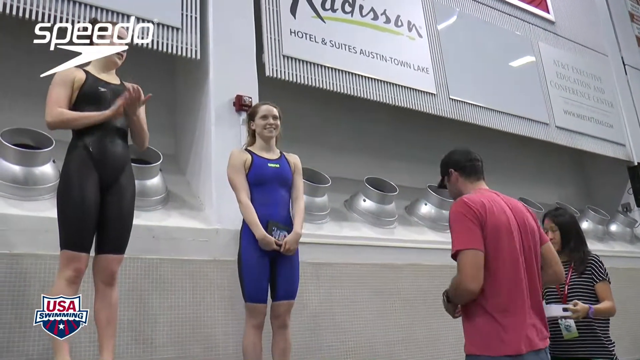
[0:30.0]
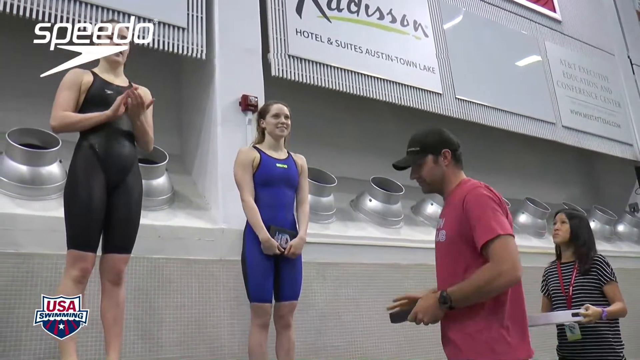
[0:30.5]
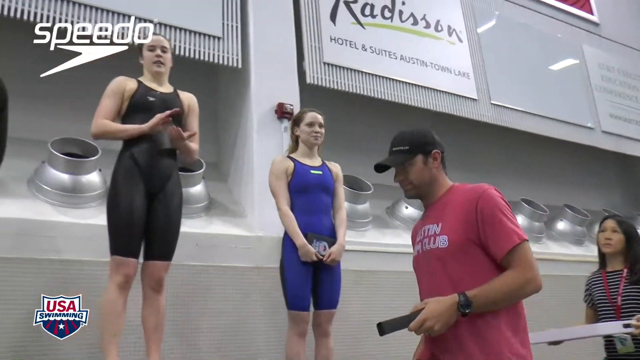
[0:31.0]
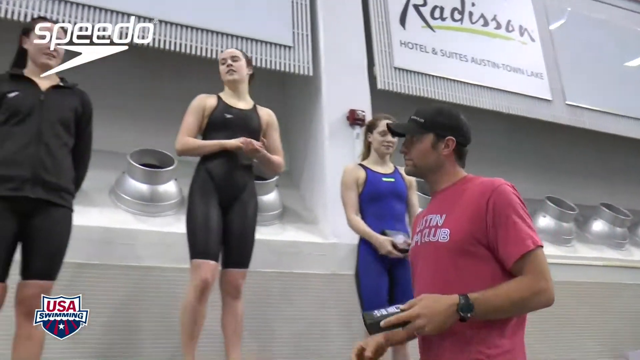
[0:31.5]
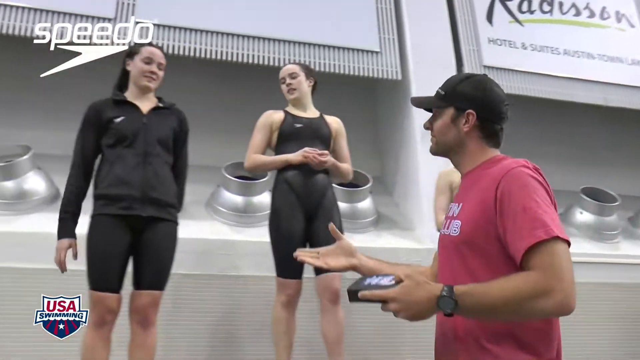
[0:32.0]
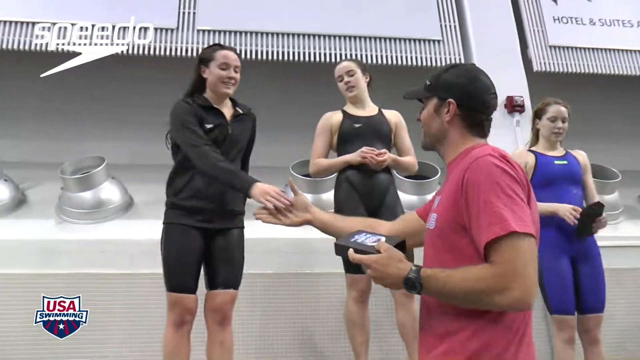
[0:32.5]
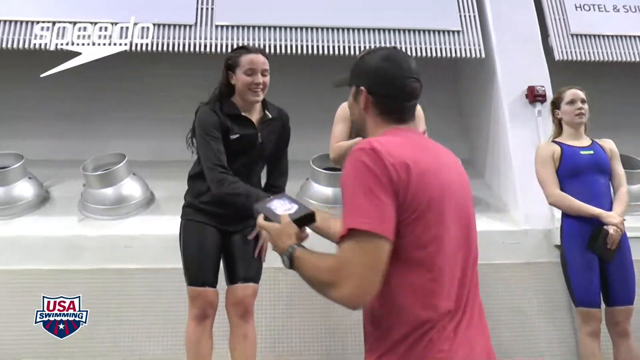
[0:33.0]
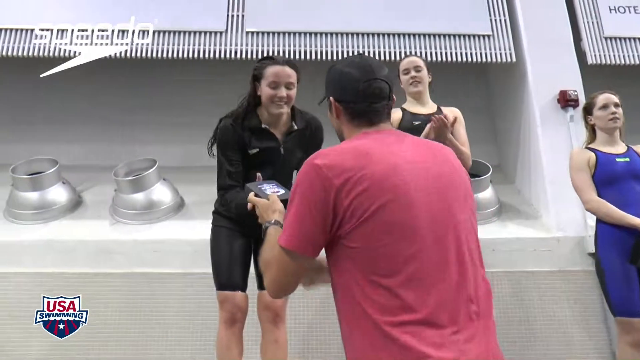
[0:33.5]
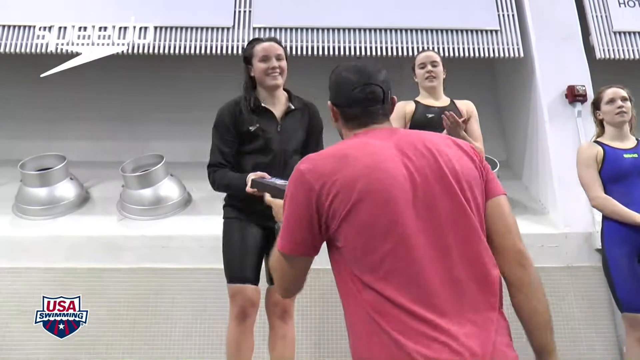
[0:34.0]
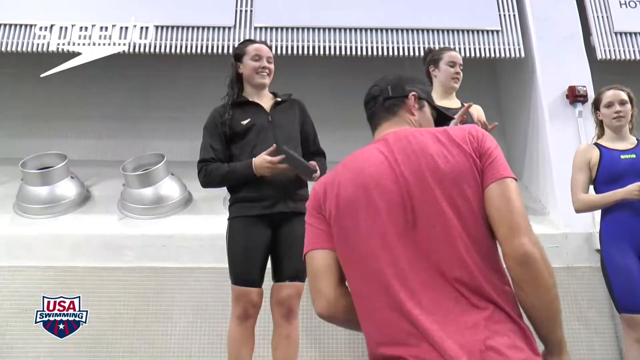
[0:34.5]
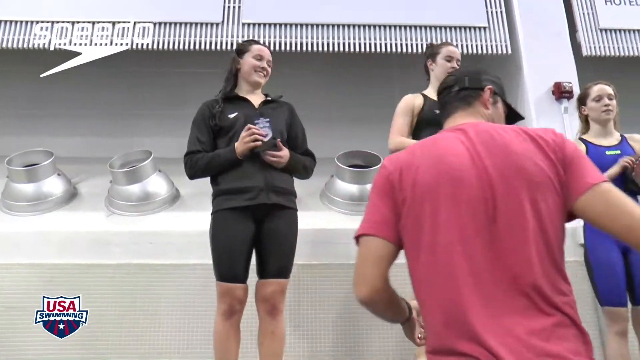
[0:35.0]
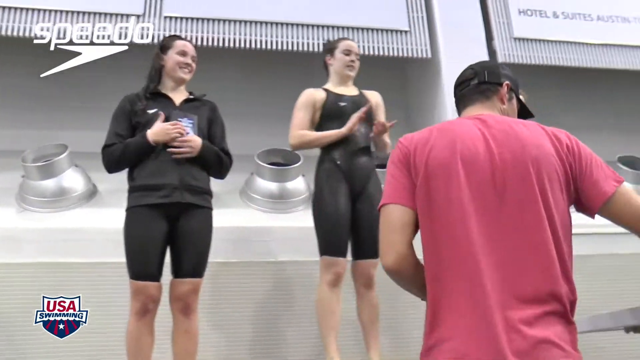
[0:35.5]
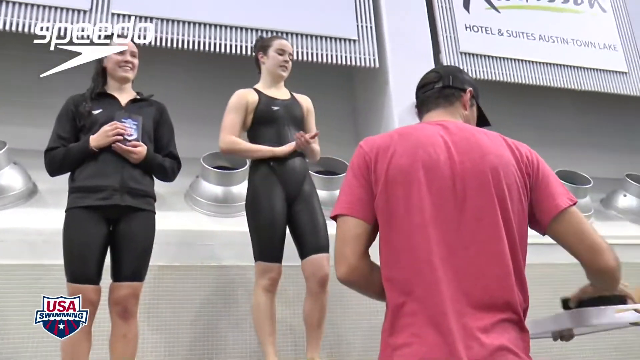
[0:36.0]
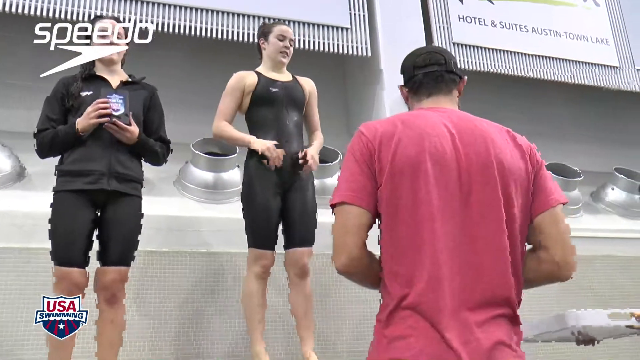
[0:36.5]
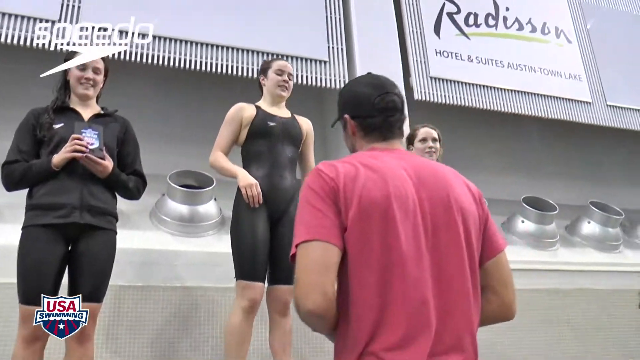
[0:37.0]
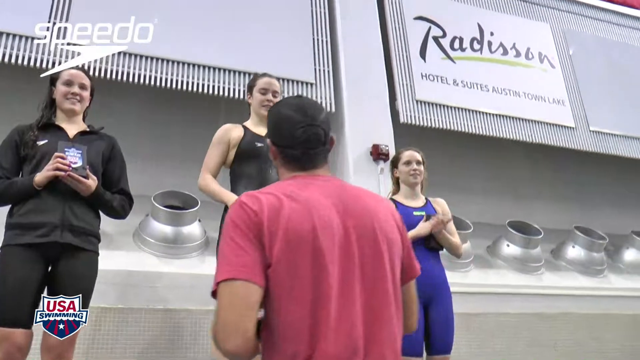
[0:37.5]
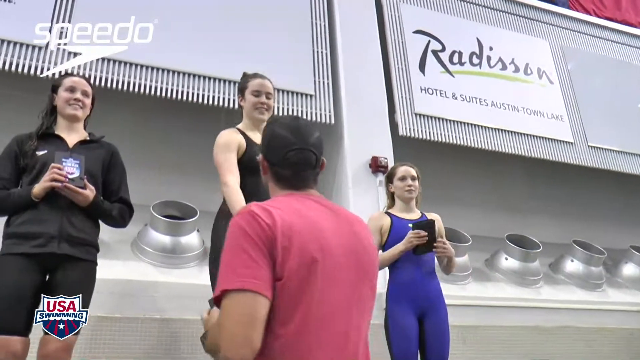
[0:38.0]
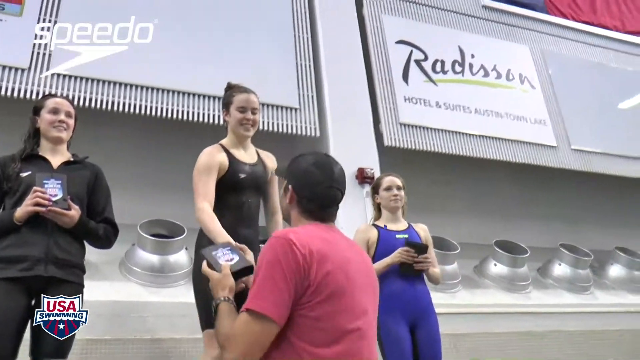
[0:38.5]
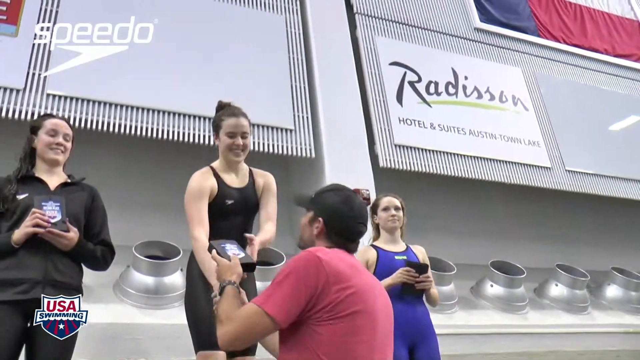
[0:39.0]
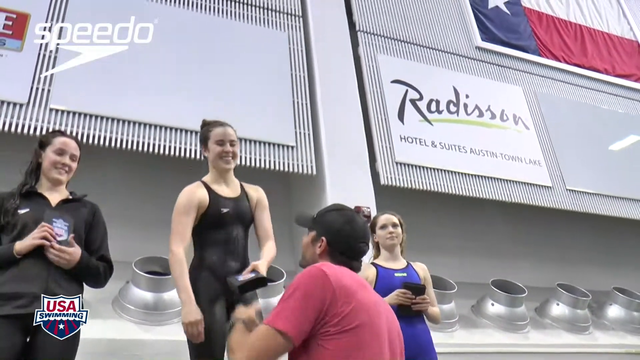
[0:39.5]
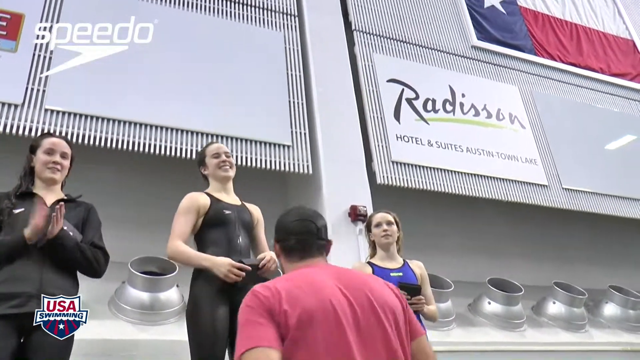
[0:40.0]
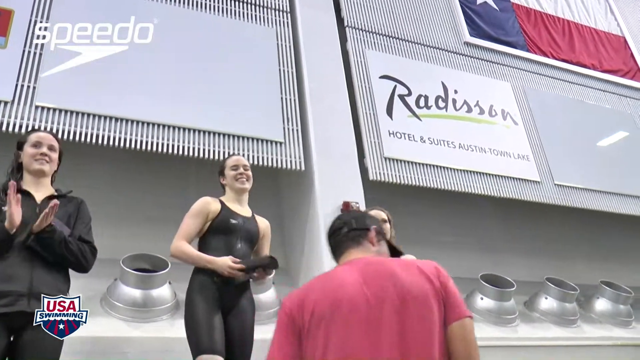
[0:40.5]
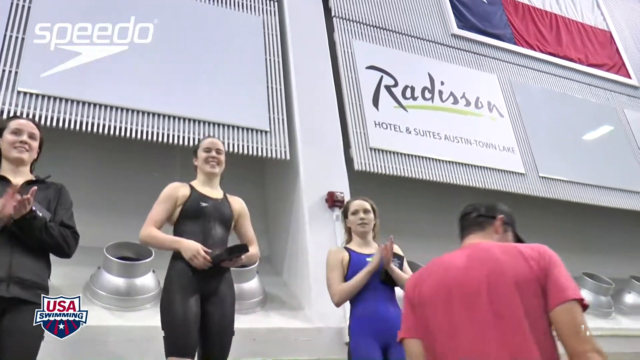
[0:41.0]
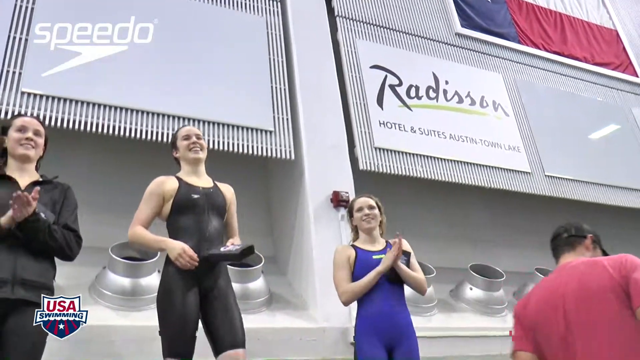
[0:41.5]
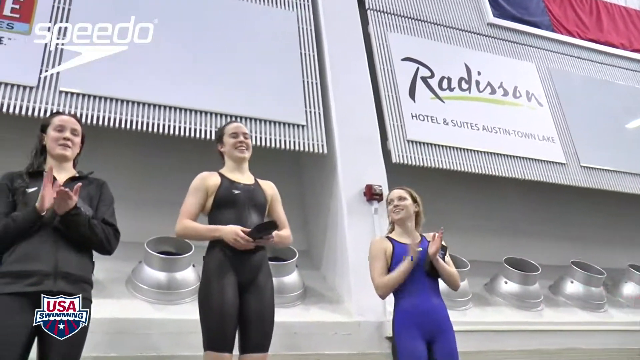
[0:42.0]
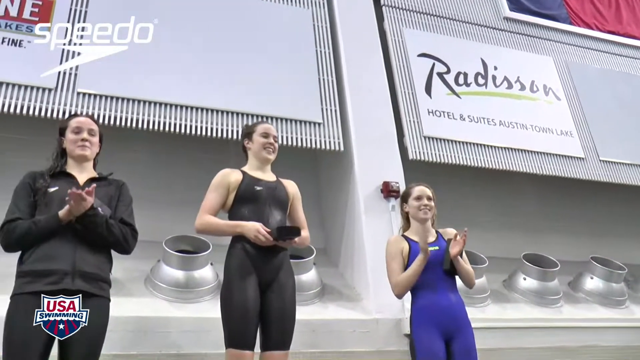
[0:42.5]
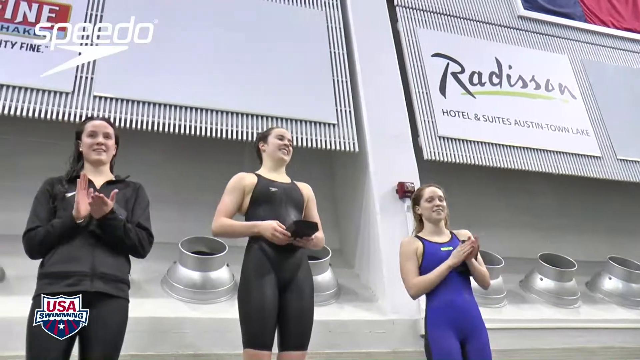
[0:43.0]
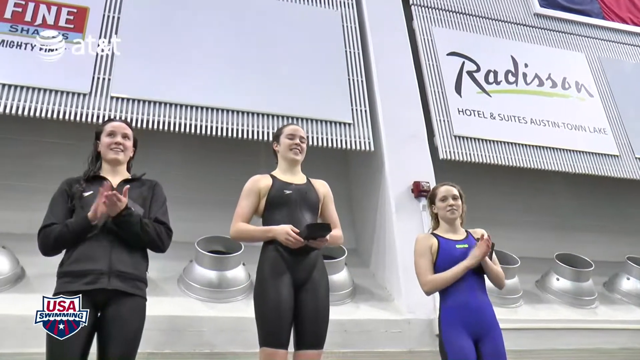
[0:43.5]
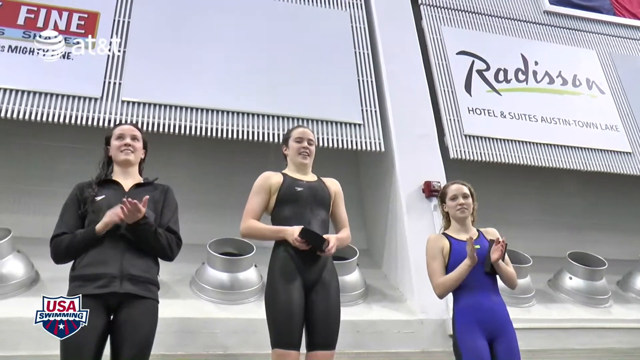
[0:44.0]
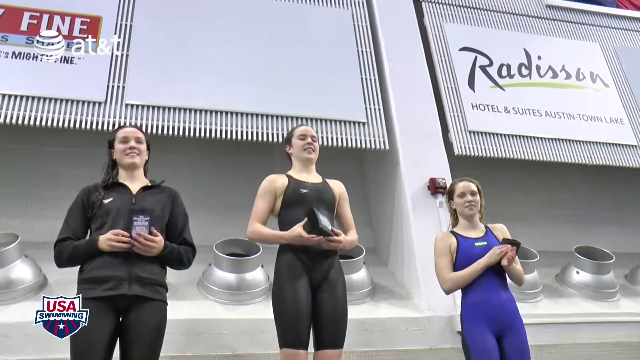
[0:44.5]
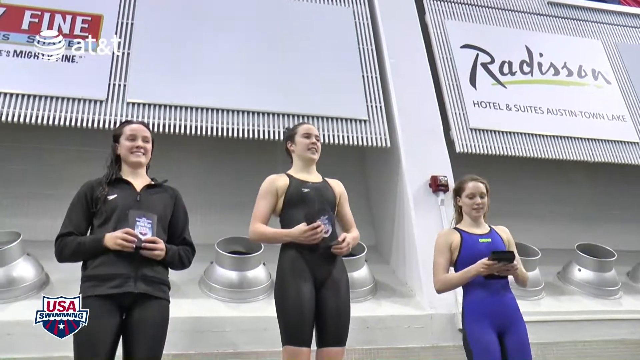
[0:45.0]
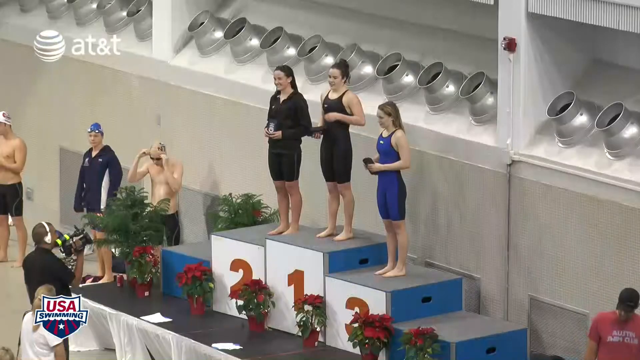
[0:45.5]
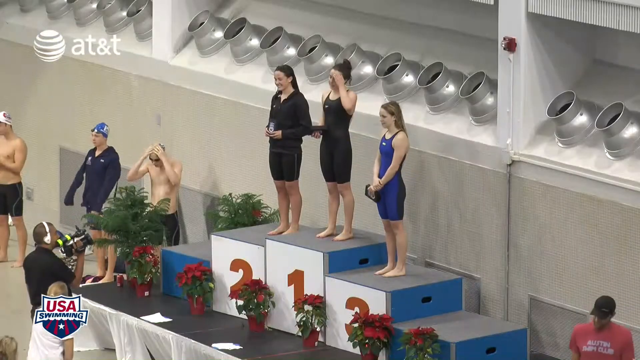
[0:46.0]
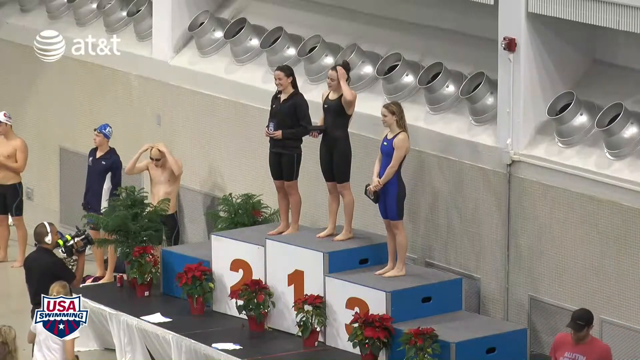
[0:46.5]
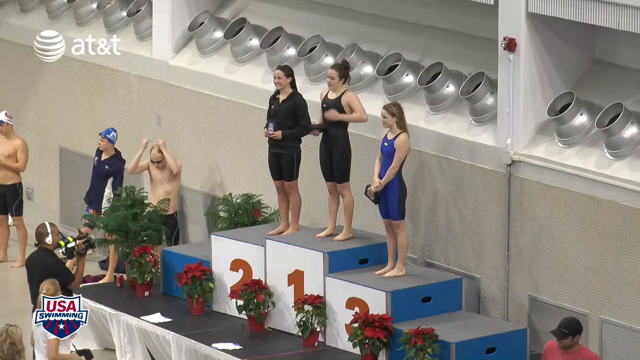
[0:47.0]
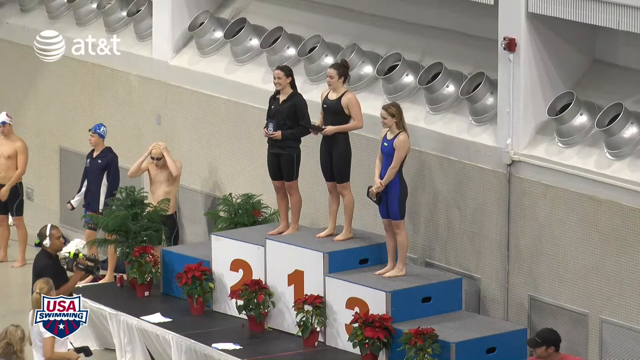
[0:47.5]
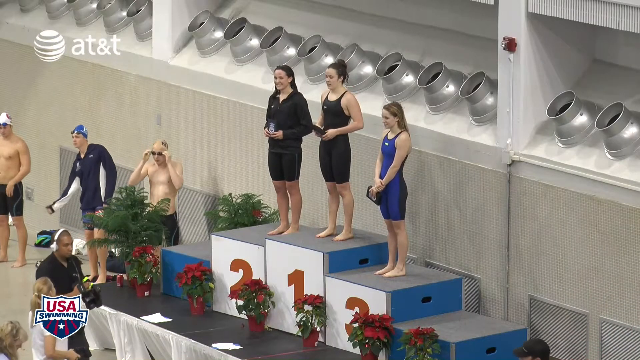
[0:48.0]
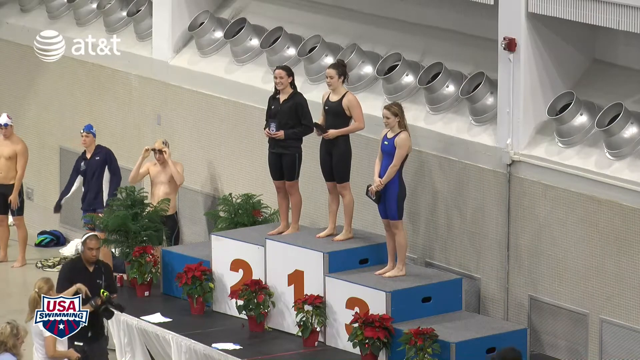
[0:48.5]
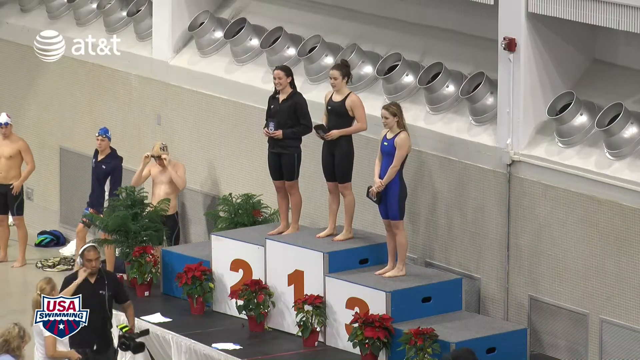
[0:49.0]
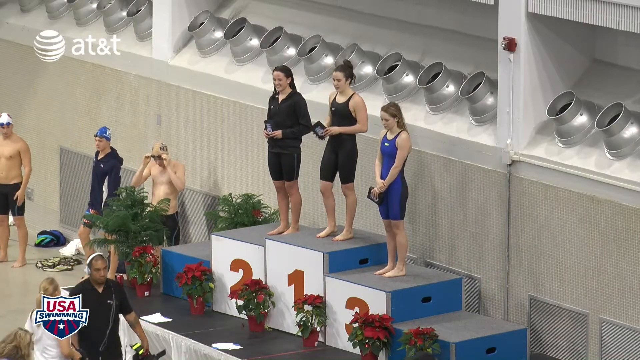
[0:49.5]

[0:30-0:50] After giving the medal to the third place swimmer, the presenter in the red t-shirt and black cap moves over to the second place swimmer and hands her a small black box, and they exchange some pleasantries. The other swimmers clap as their colleagues receive their medals. The winner is then presented with the first place medal; she shakes the presenter's hand while the second and third place winners clap for her. The video then cuts to a wide shot of the three swimmers standing on the podium, being filmed by a television camera. On the left of the screen are three male swimmers who look like they are warming up for an upcoming race. In front of the award podium are plants that look like poinsettias, six of them in view. Further back, between the swimmers and the award winners, are what look like ferns and some other foliage. The cameraman finishes his shot and begins walking out of the frame.